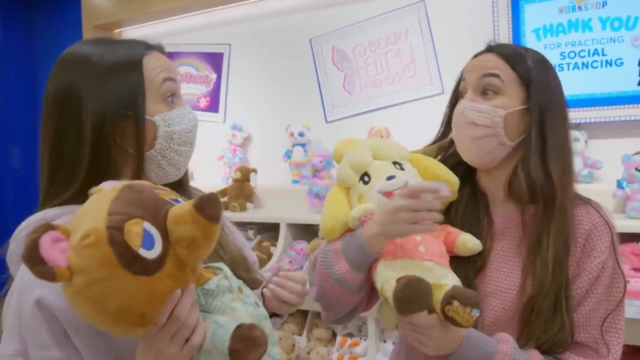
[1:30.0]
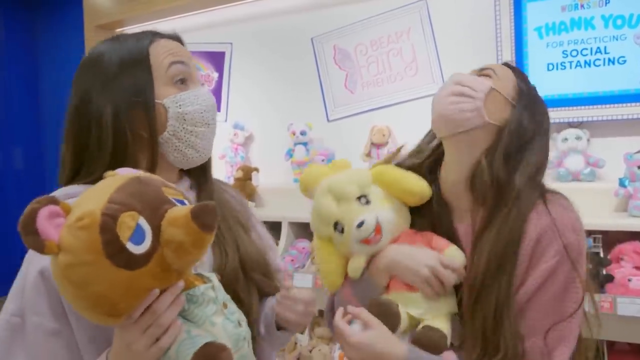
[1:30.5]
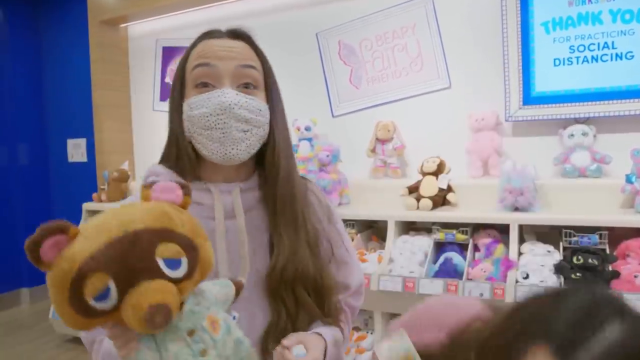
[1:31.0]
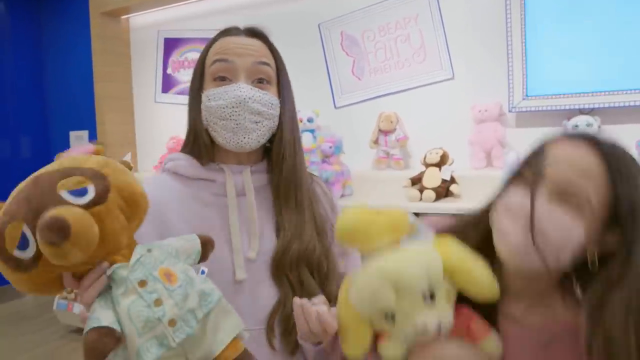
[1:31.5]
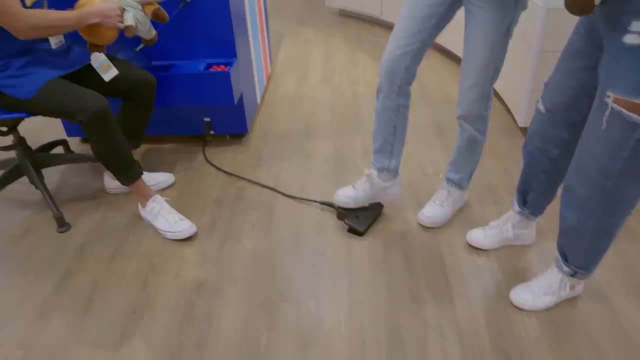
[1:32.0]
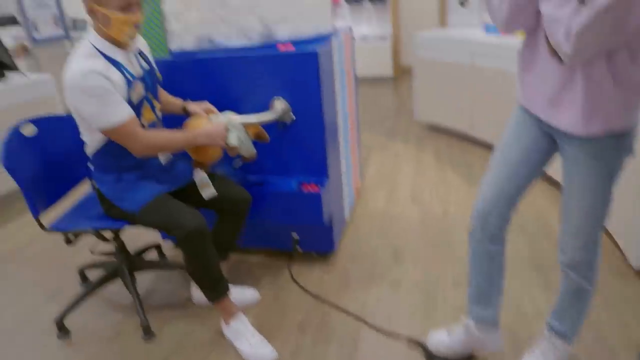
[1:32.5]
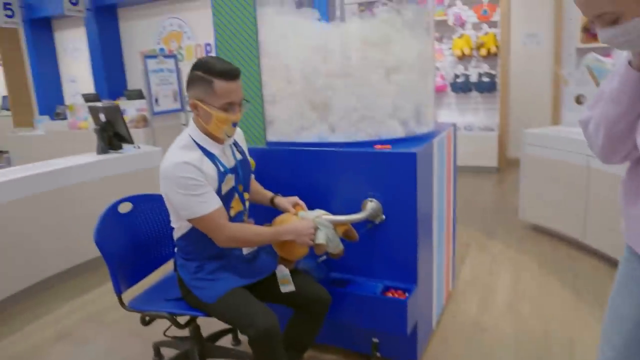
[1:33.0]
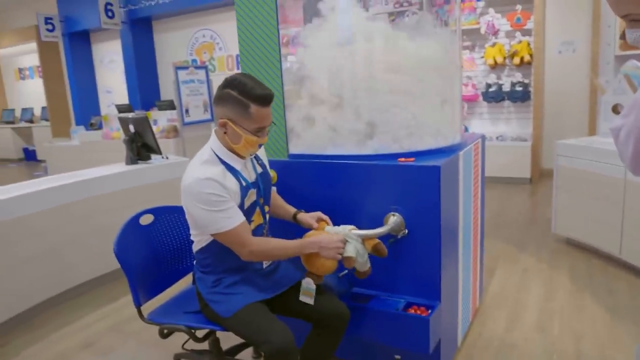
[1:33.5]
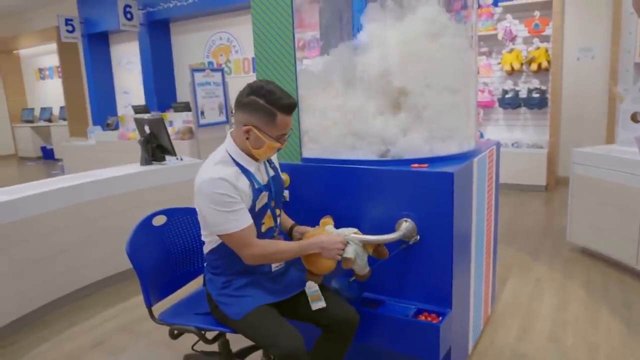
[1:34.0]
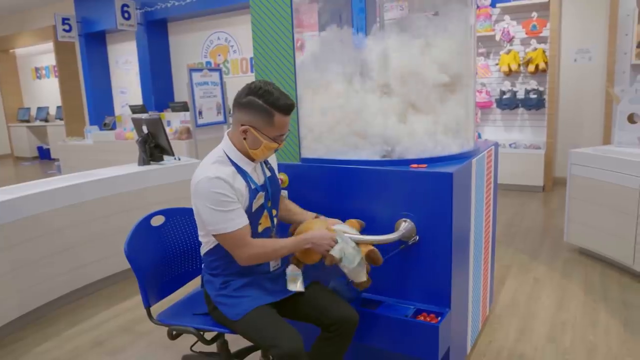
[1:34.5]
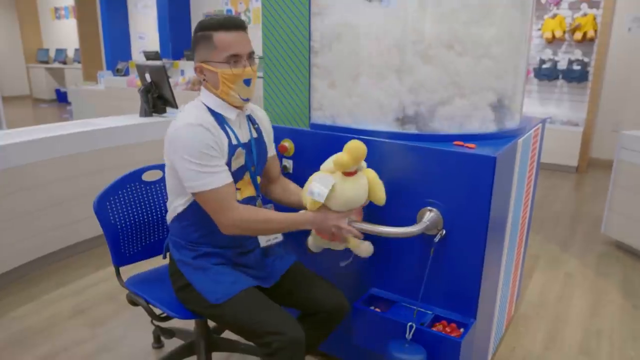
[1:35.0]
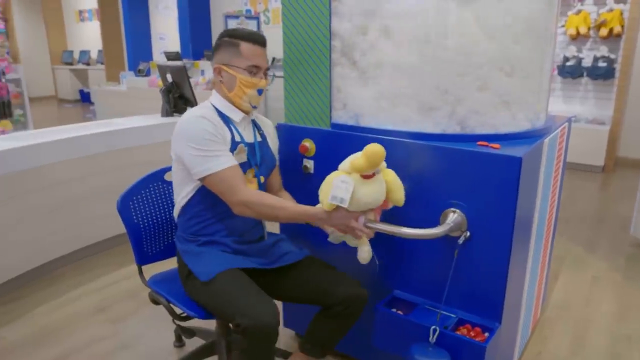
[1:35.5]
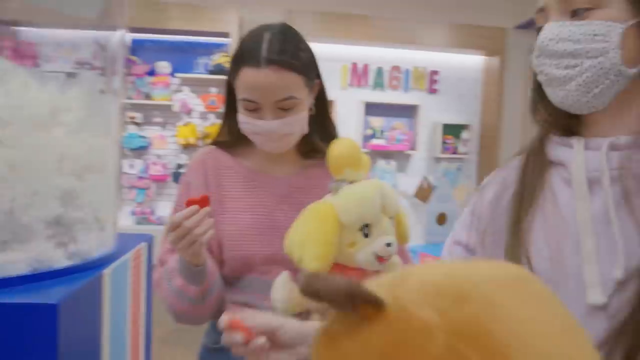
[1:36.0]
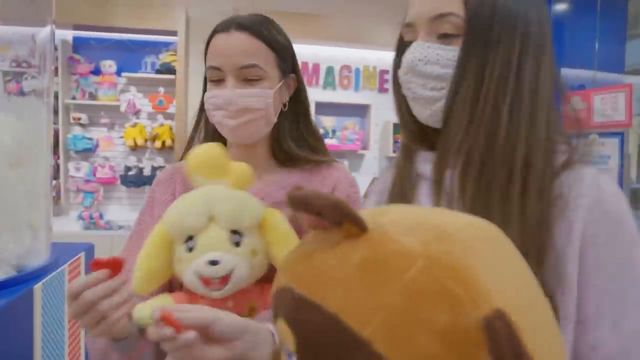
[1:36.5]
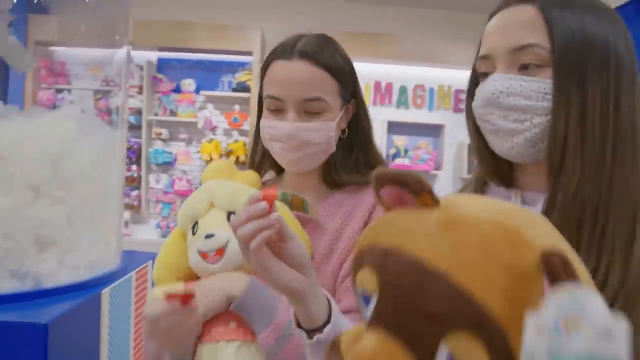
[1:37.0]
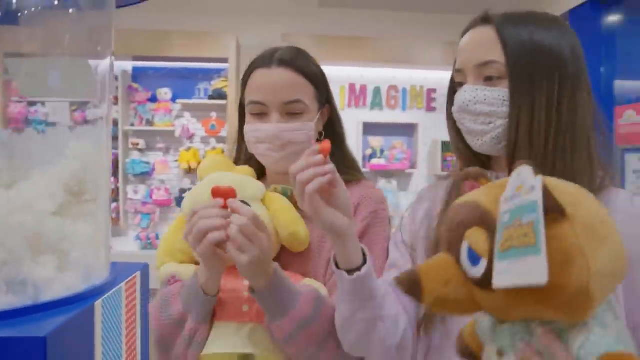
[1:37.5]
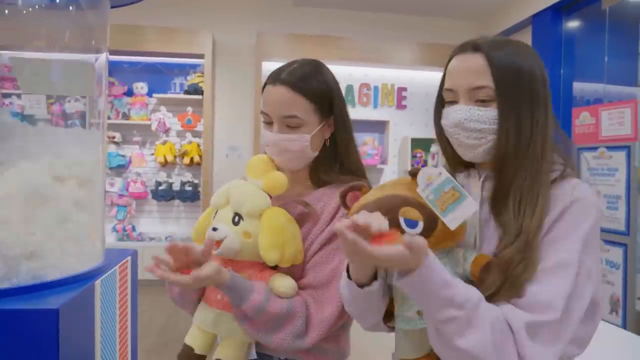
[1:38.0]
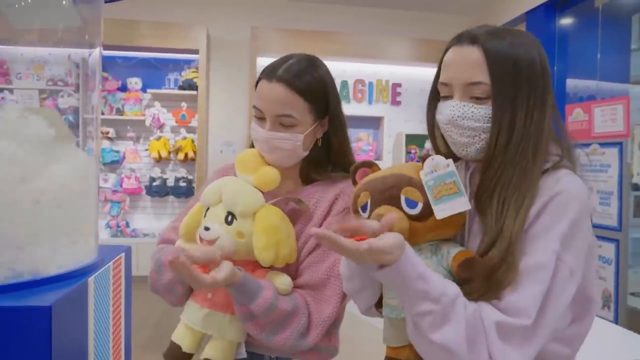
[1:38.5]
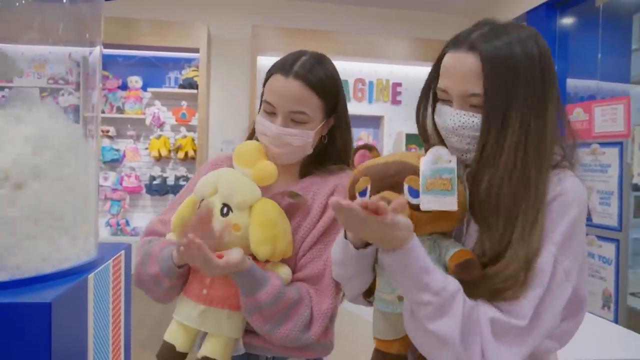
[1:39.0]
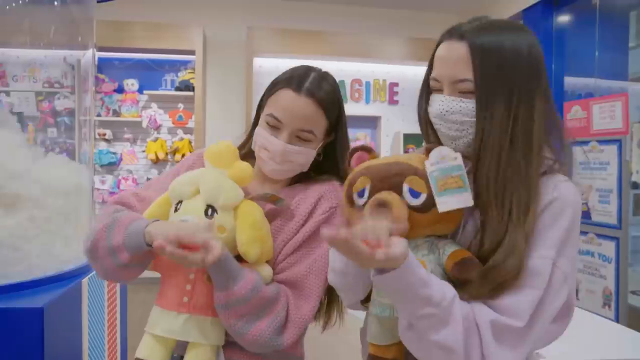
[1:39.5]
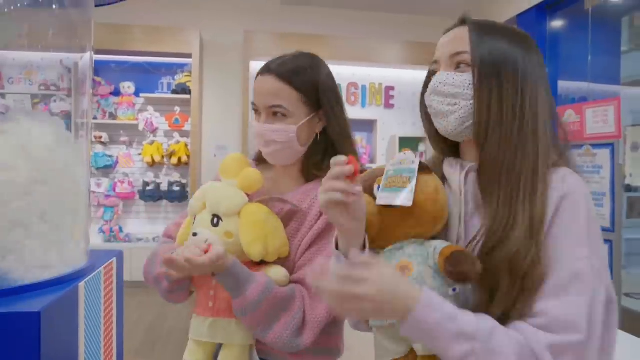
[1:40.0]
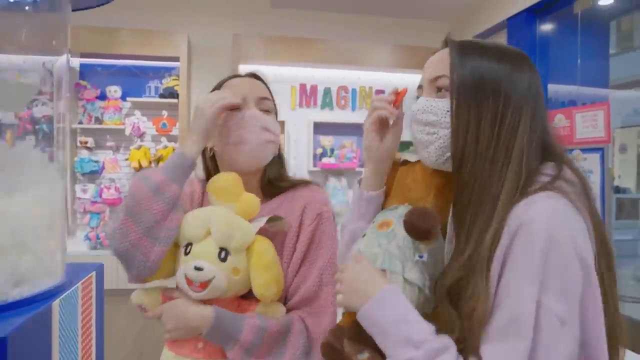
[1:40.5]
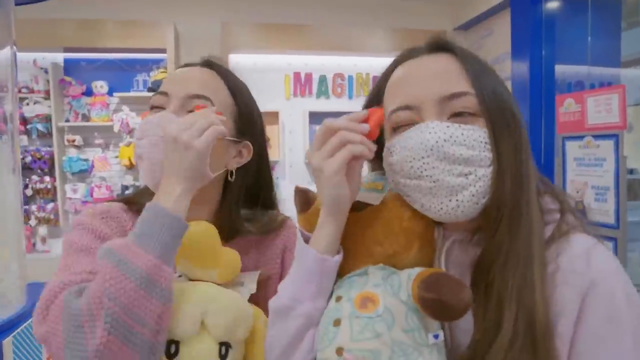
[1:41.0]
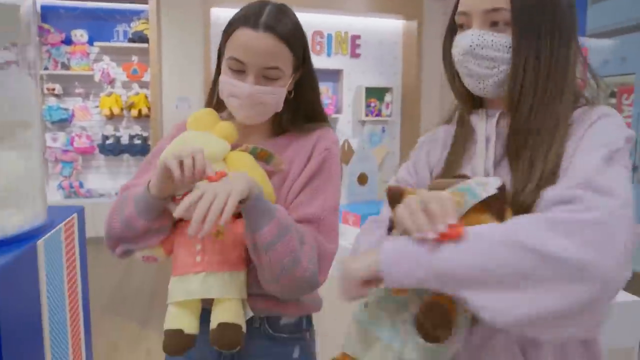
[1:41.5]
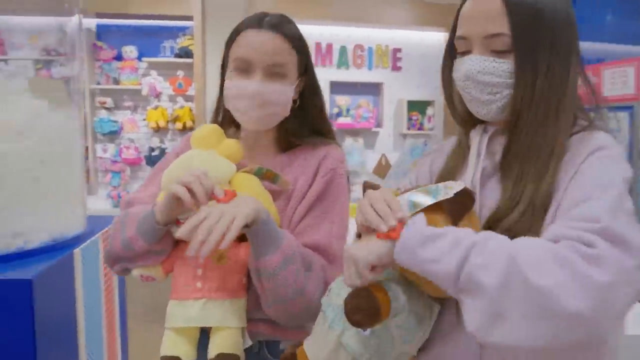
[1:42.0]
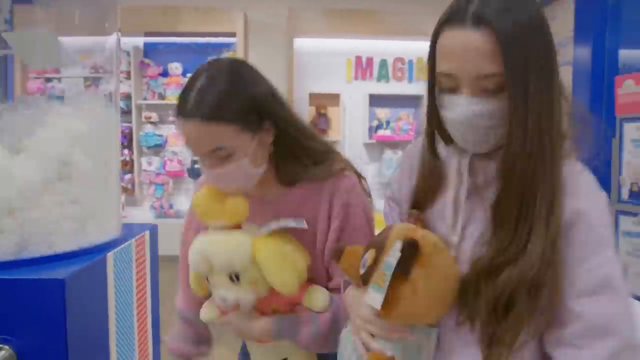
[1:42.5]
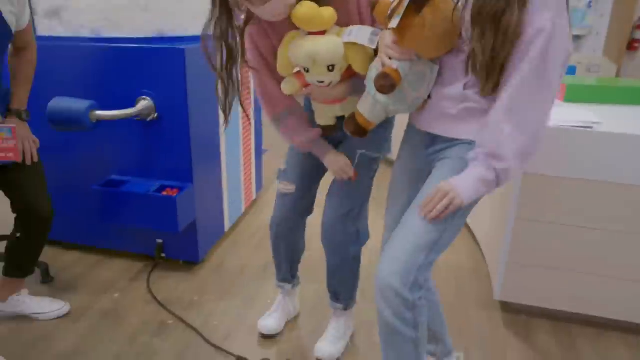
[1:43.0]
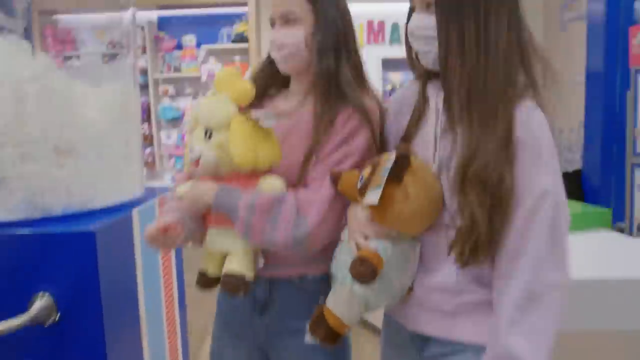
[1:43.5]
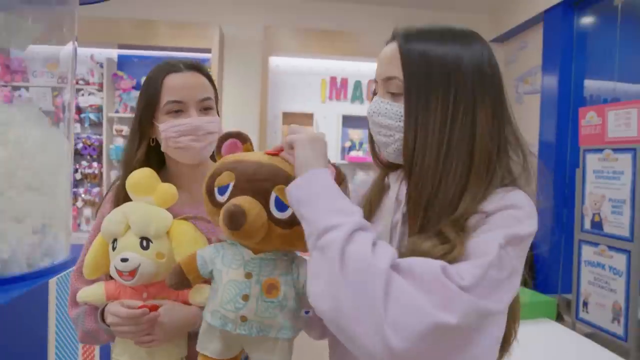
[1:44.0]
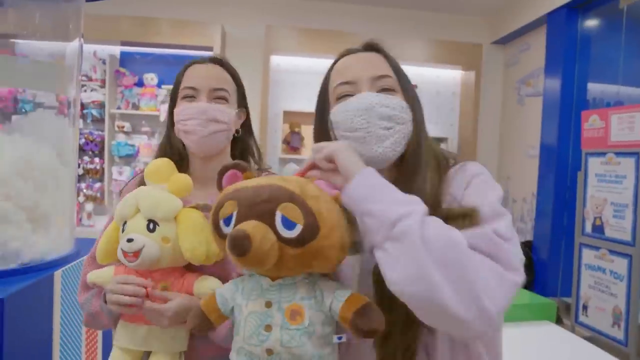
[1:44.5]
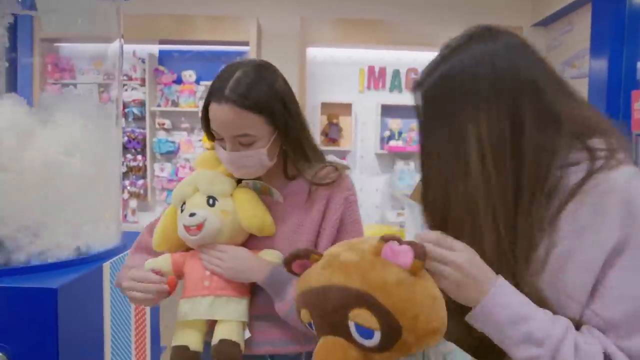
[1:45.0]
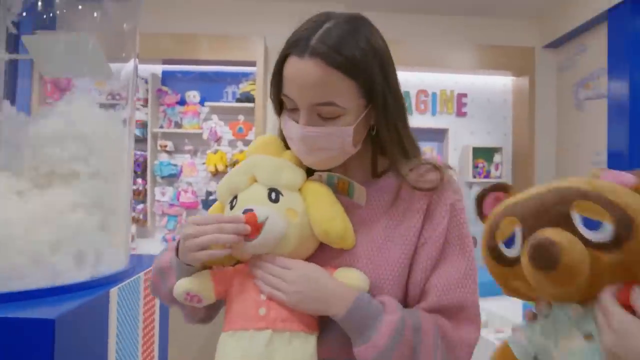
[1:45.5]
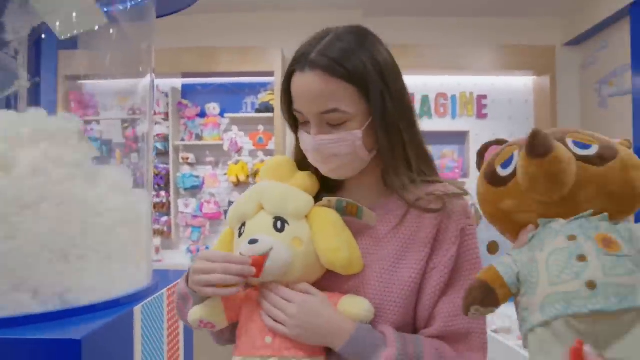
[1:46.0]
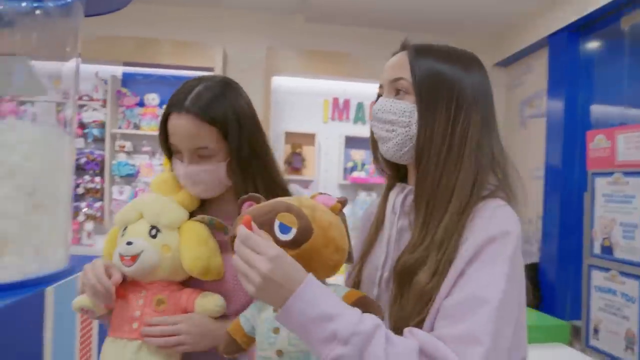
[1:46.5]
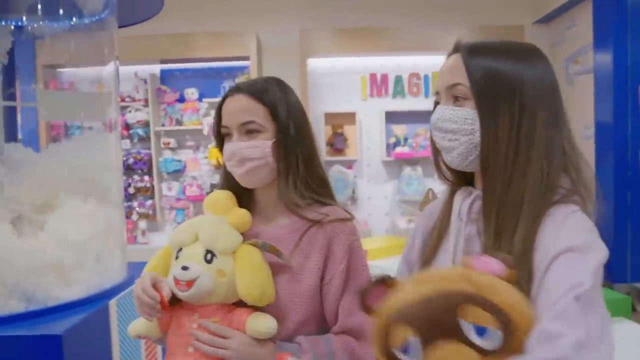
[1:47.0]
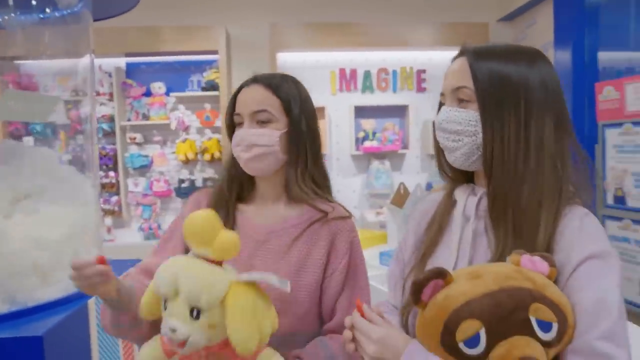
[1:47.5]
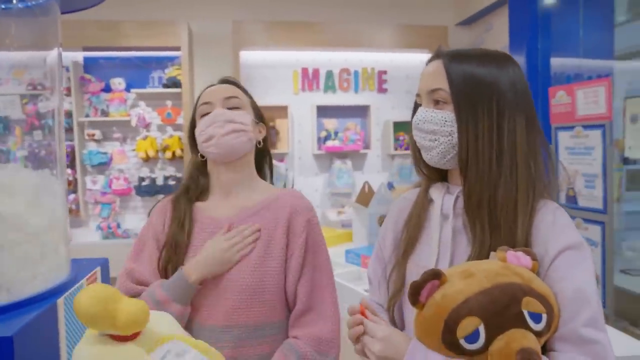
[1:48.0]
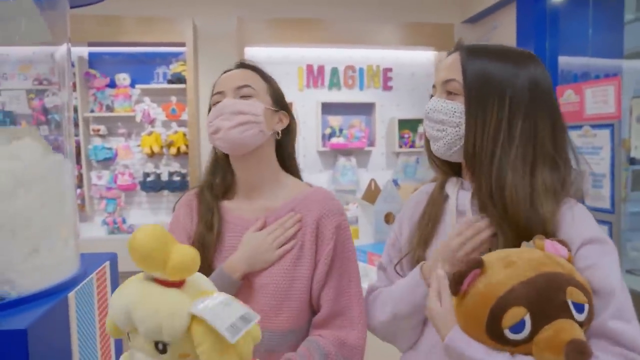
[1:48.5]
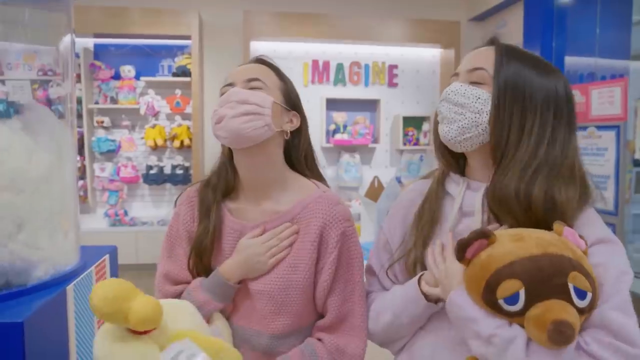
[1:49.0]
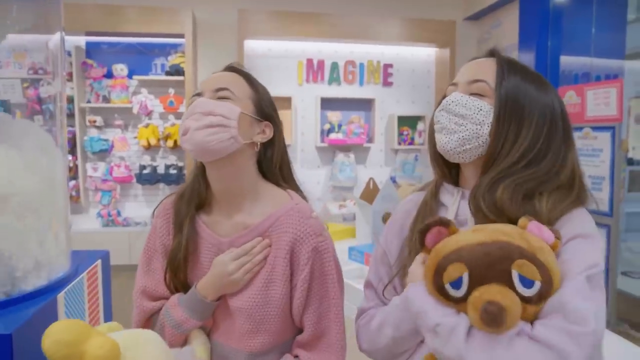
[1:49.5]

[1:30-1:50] The women, still holding the gadgets, are very excited. The man takes one of the teddy bears and puts it on the counter, then takes another one, puts it on the counter, and gives them back to the women, who jump up and down. The man sits on a blue chair at the counter and performs some functions there, then gives the teddy bear back to the women. They are also given something pink or red, of unclear purpose. They rub it on their skin, look at it, bend down and try to give it to the teddy bear, then touch their hearts, looking happy and satisfied.